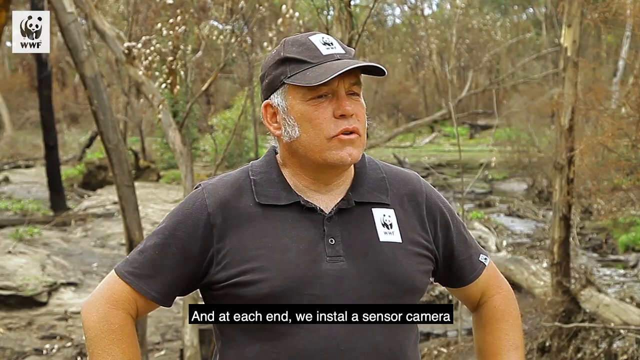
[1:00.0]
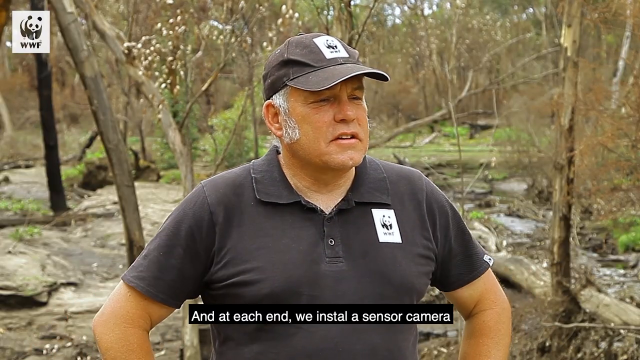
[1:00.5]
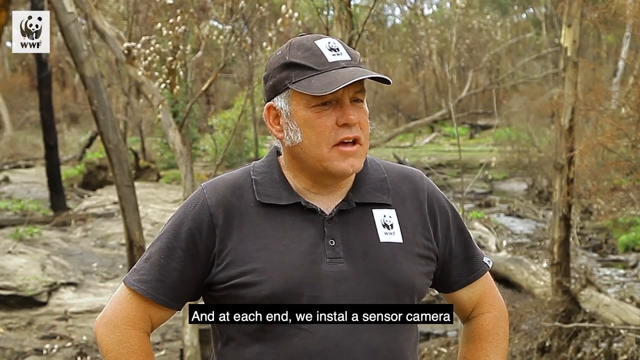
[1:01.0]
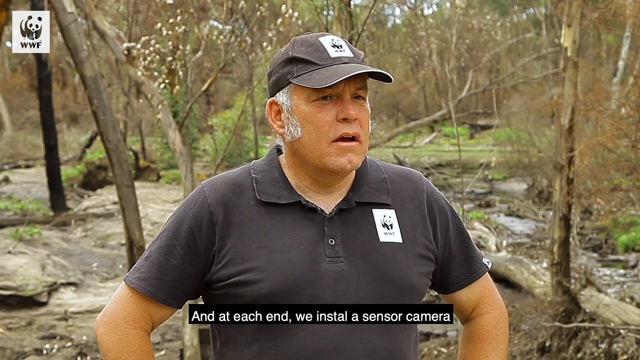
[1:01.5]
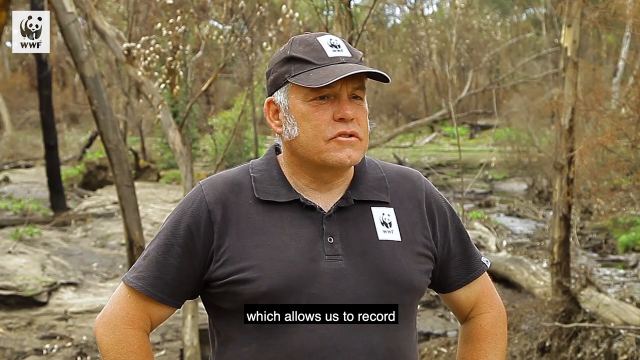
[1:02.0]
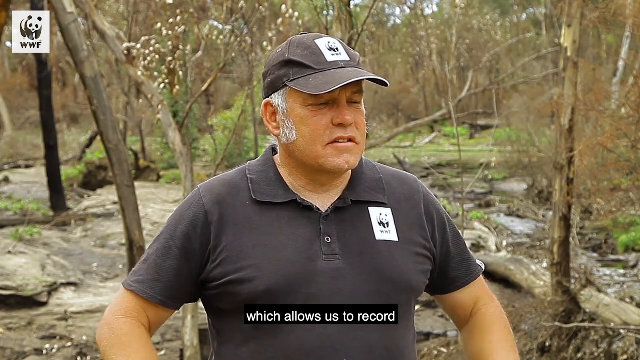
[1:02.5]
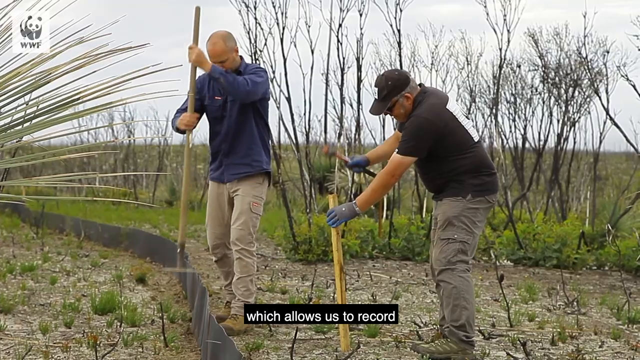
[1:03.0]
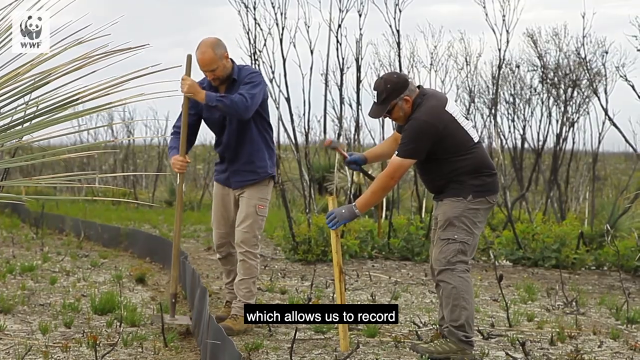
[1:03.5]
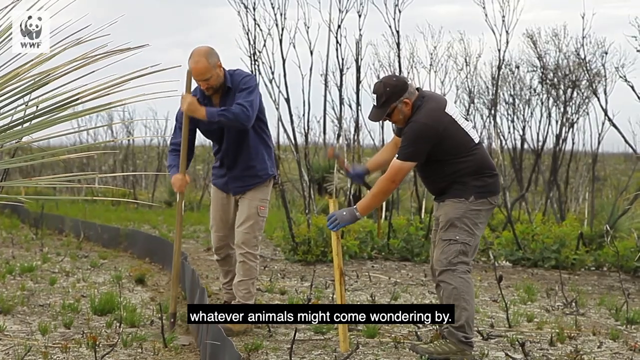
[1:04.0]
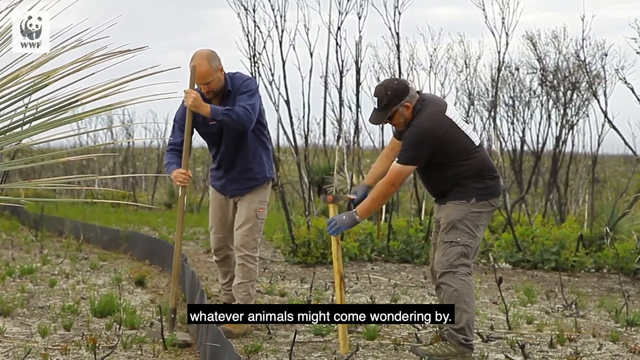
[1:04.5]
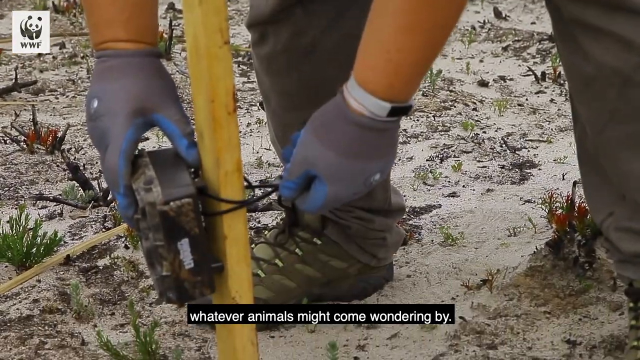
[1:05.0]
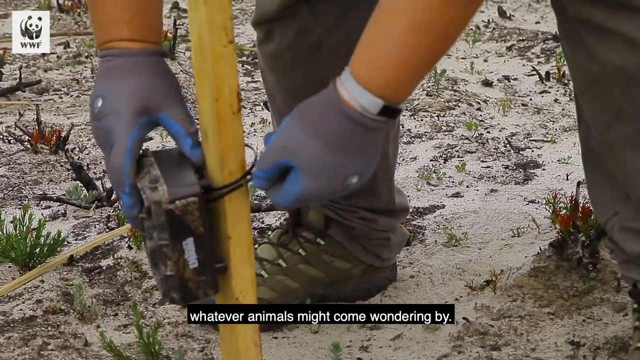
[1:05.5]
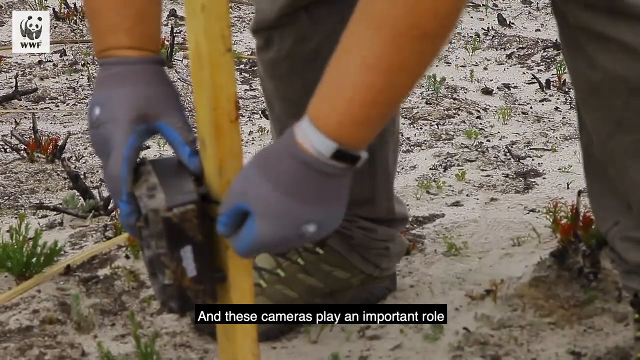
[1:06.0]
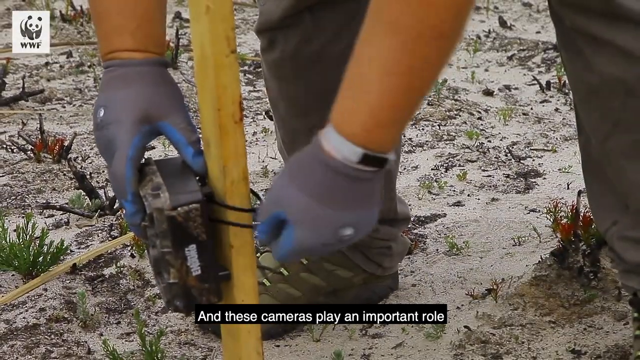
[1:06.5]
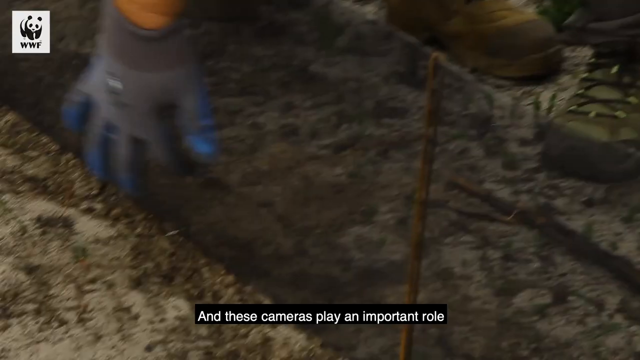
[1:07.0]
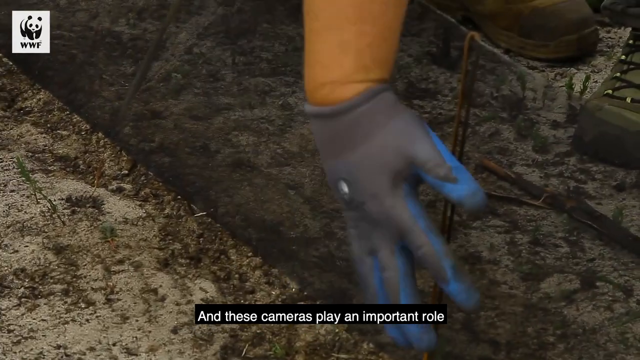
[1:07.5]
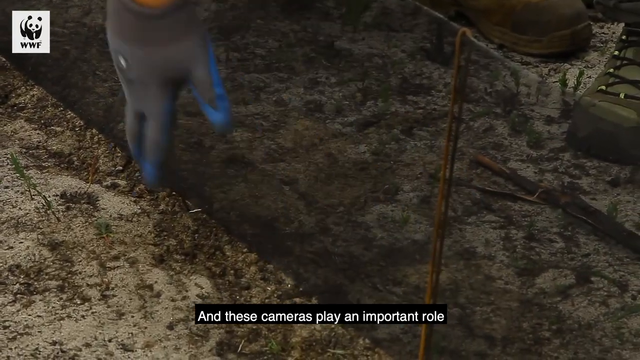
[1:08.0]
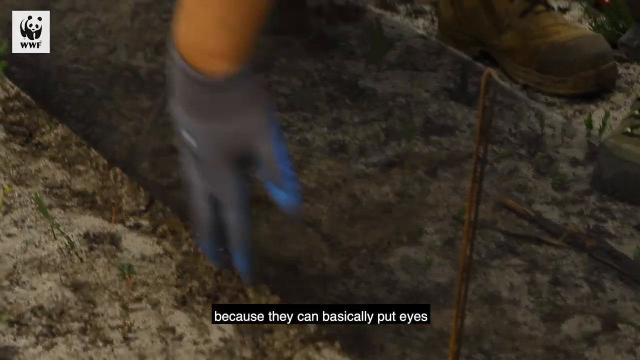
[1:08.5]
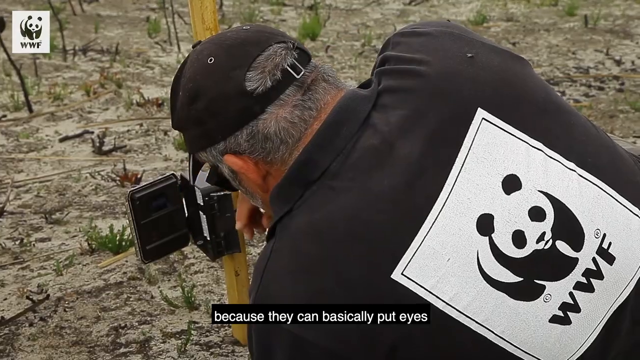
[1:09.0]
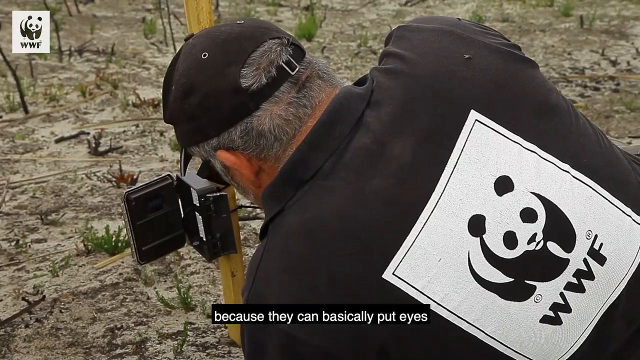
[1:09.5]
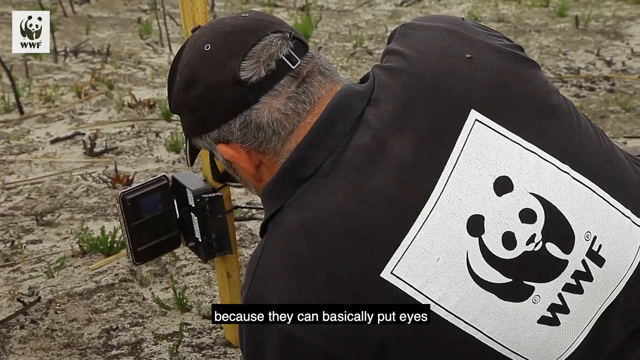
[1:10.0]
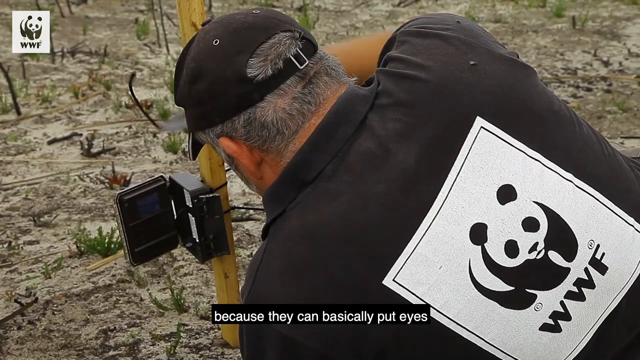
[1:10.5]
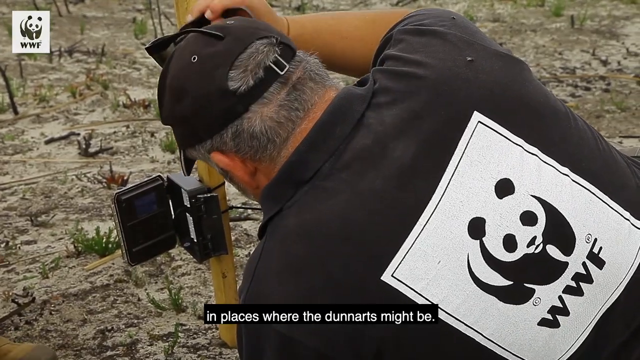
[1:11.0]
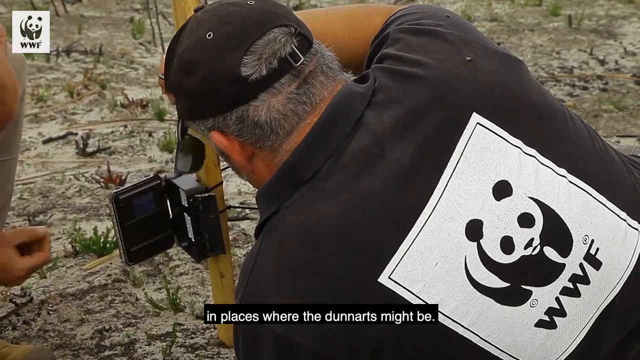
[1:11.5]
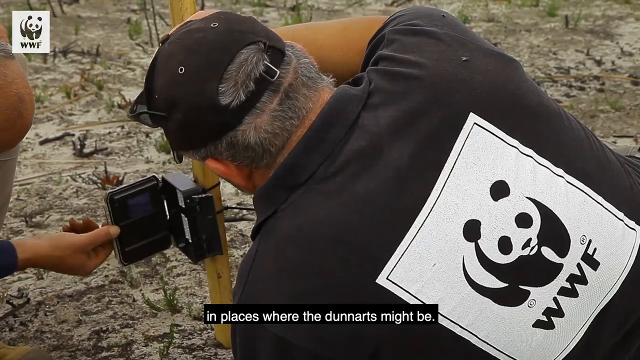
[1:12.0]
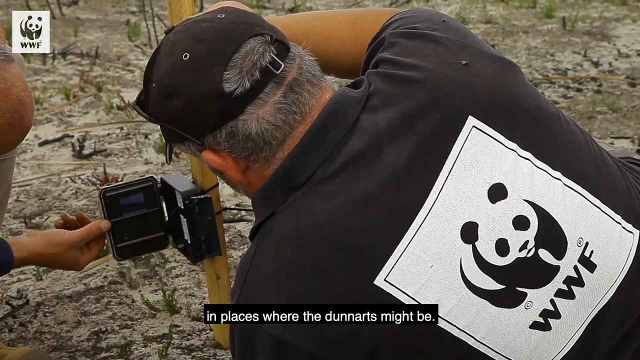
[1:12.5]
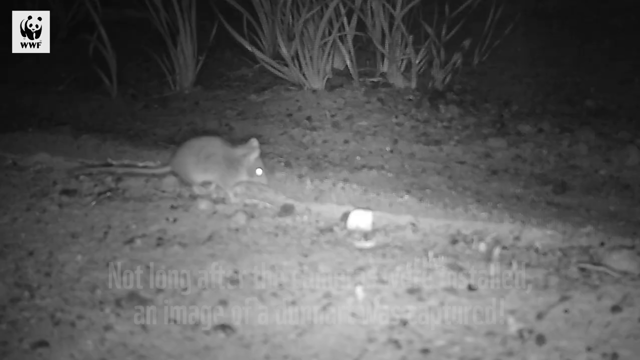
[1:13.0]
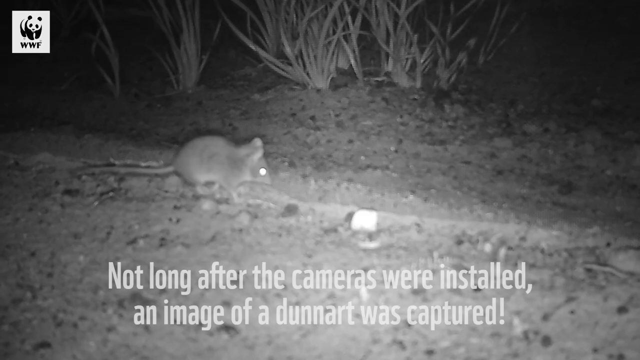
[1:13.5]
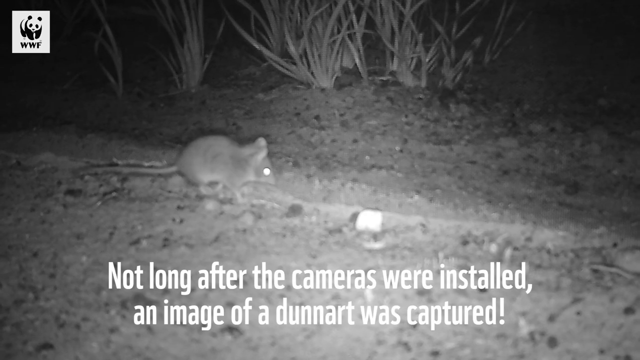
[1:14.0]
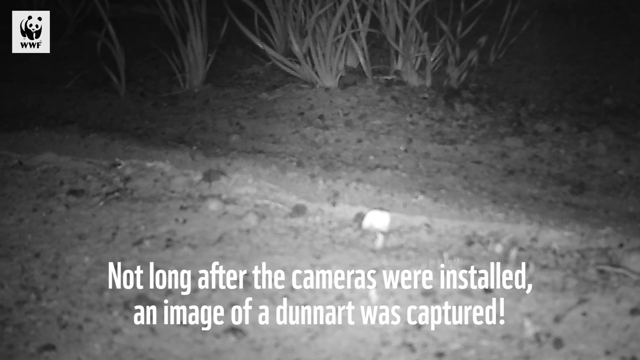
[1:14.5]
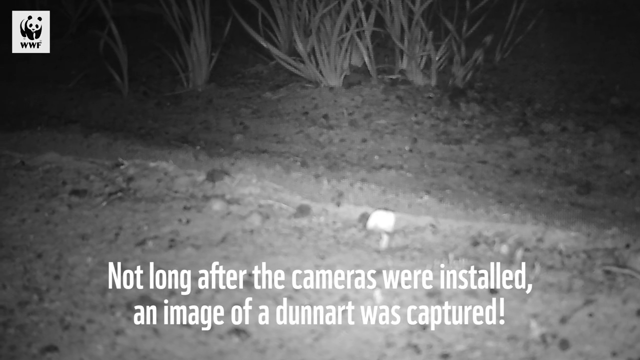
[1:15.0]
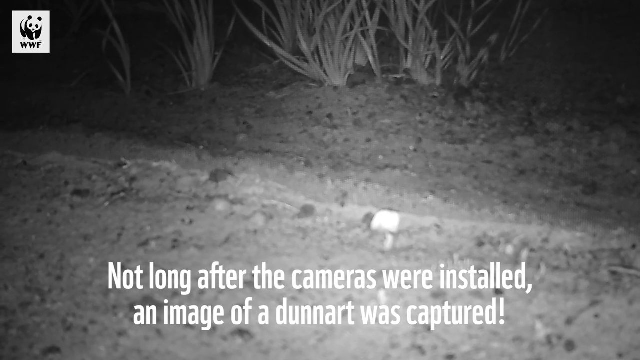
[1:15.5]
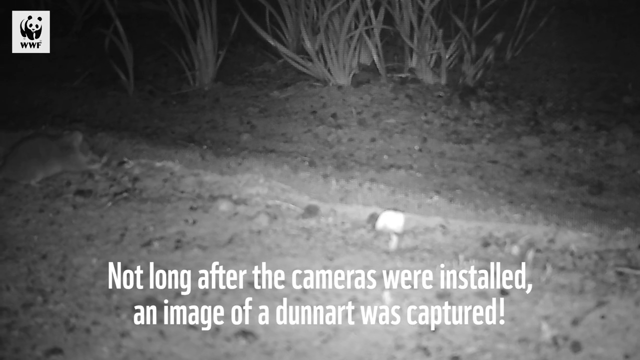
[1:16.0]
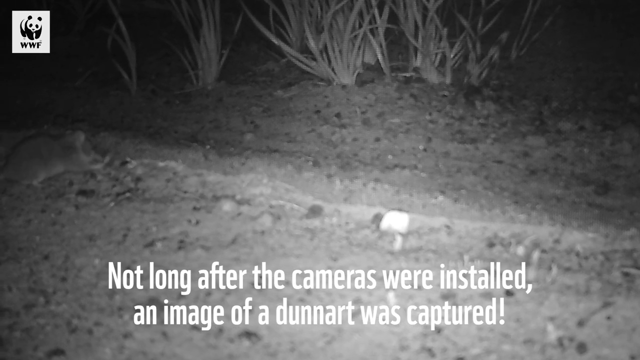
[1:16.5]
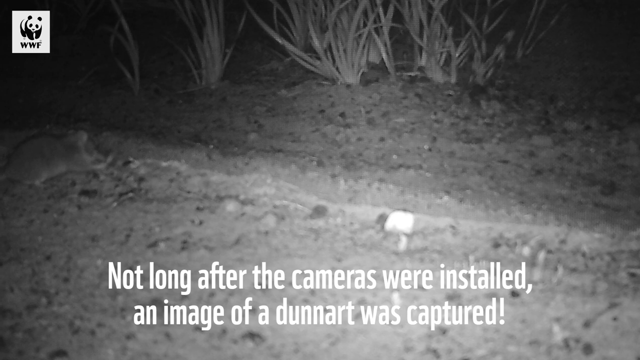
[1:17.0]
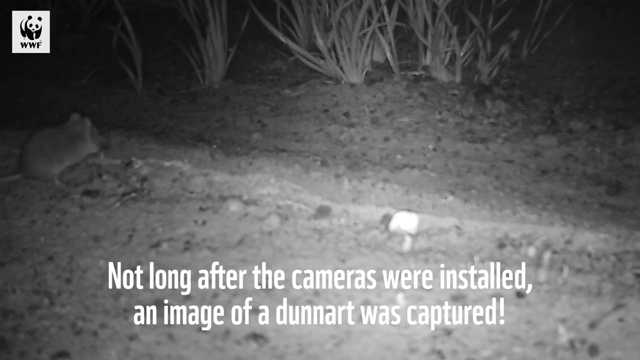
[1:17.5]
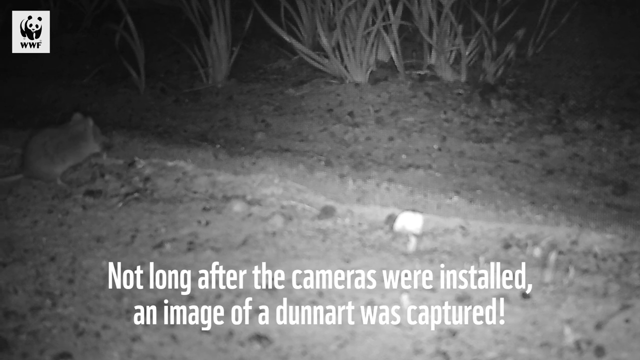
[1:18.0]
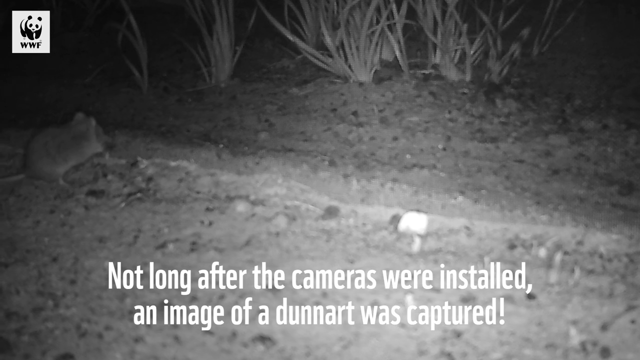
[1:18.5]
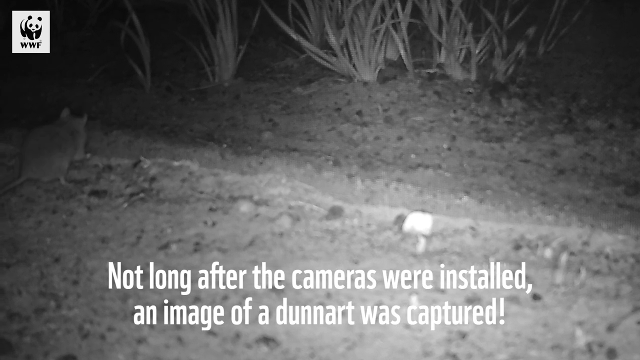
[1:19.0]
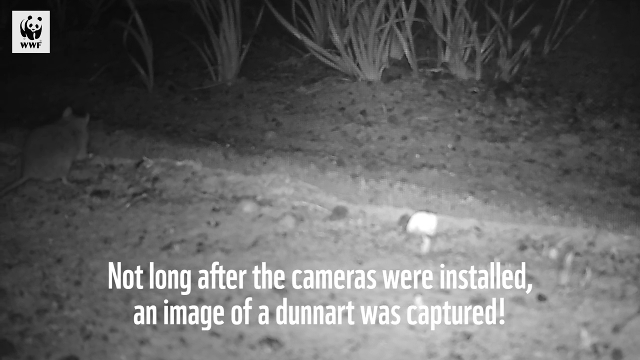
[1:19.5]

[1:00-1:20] The man in the black shirt is in the earlier interview position, both hands on his hips, speaking to the camera. A cut shows the two men in the field. One appears to be shoveling the dirt, while the other, to his right, hammers a stake into the ground, repeatedly hitting it with the flat of the hammer. A close-up shows the base of the stake as one of the men ties something around it that looks like a light. Next, a person appears to smooth out some of the dirt. One of the men leans over onto the ground, inspecting the black device tied to the peg, and adjusts the sunglasses on his forehead. The other person is visible just to the left of the frame and appears to be messing with the door on the device. A cut shows night vision footage of a small rodent on a dirt path, apparently quick time-lapse footage of the rodent moving around.